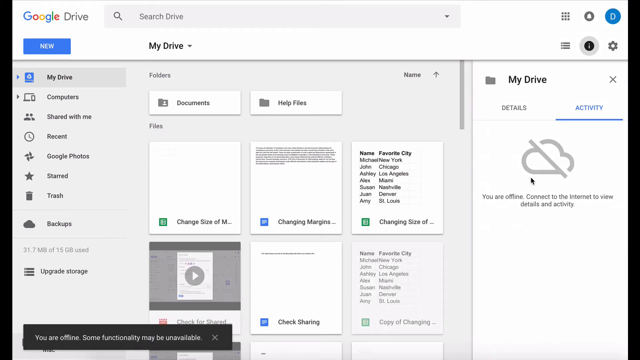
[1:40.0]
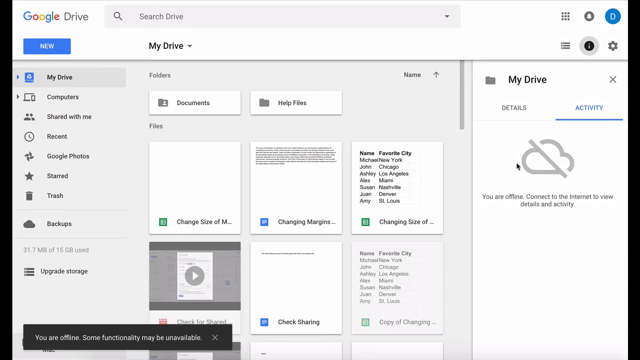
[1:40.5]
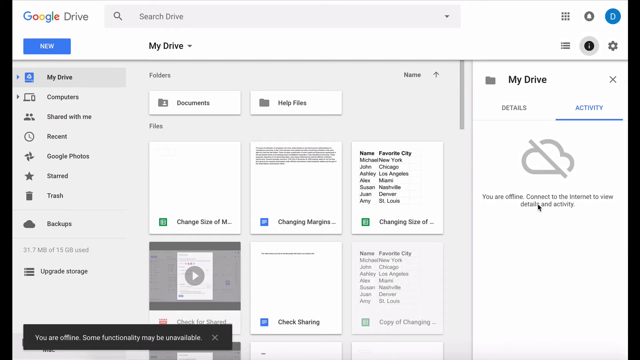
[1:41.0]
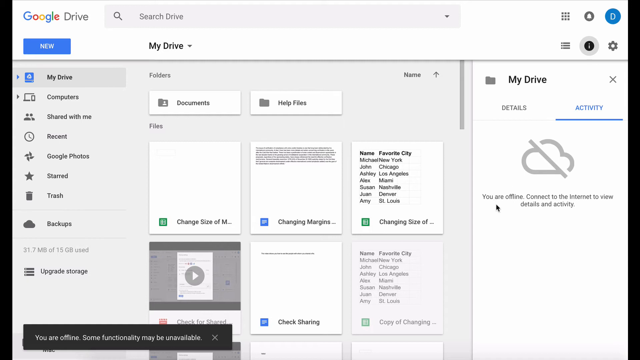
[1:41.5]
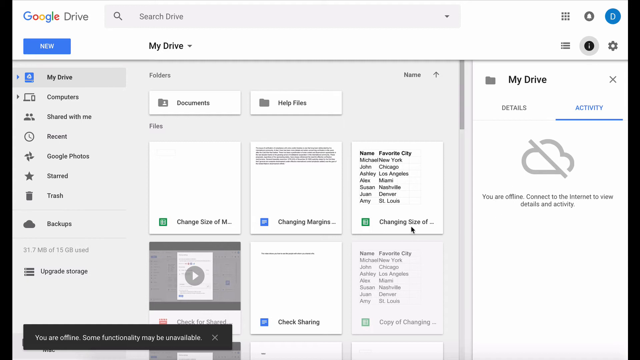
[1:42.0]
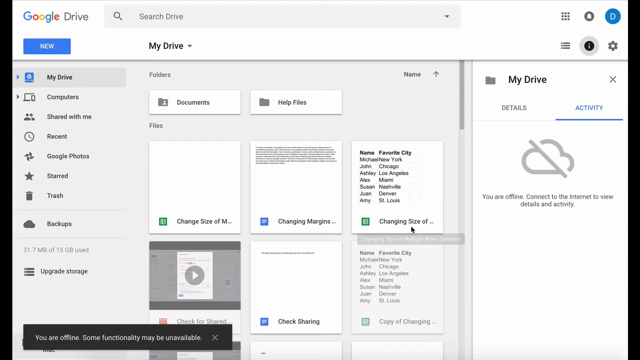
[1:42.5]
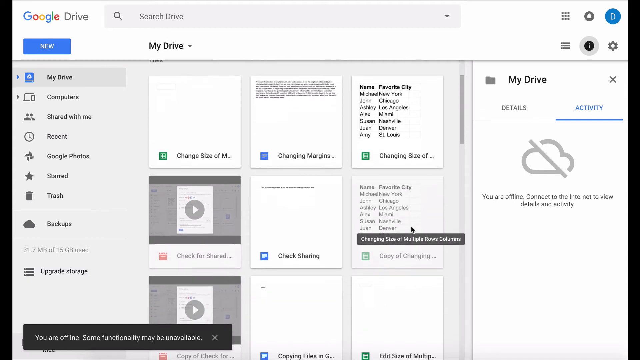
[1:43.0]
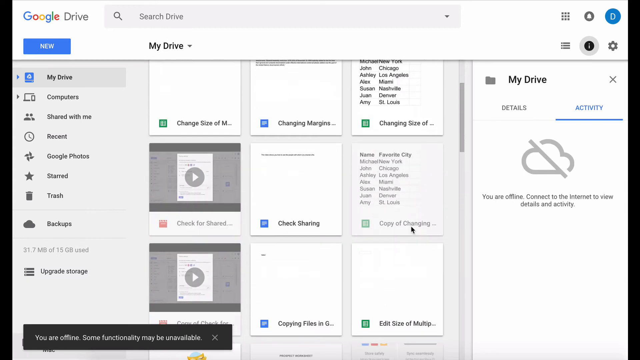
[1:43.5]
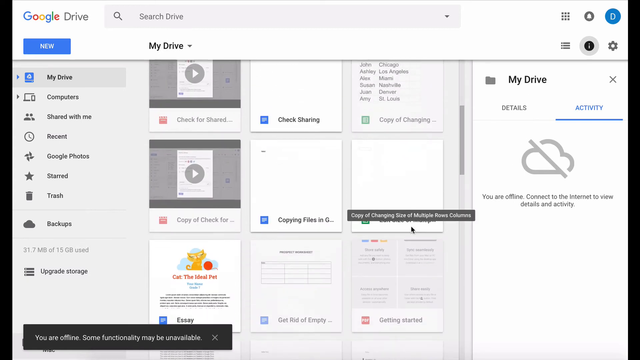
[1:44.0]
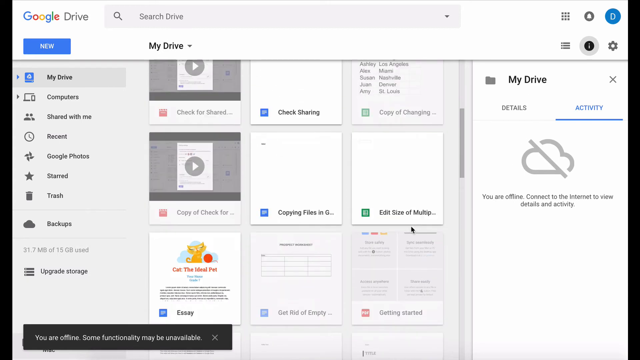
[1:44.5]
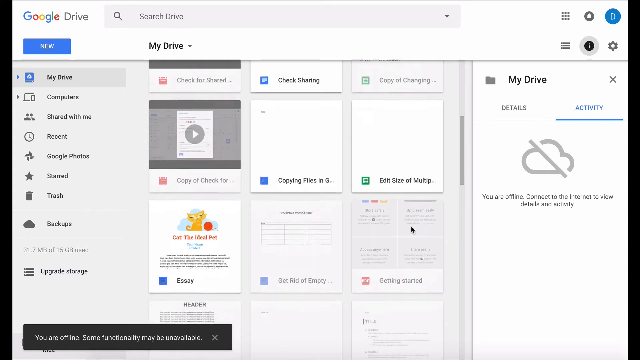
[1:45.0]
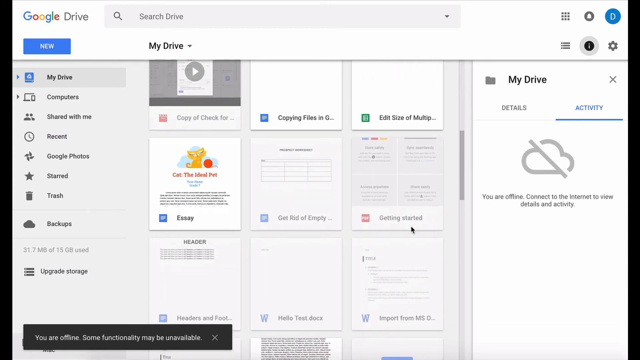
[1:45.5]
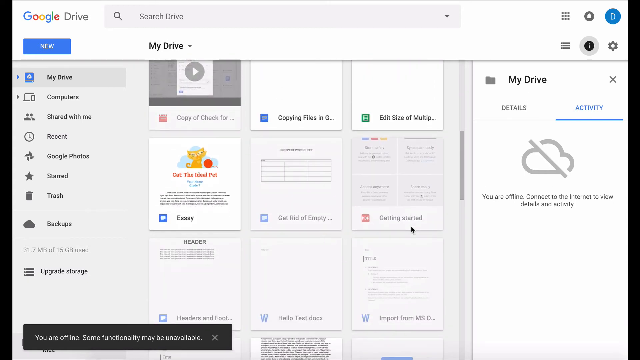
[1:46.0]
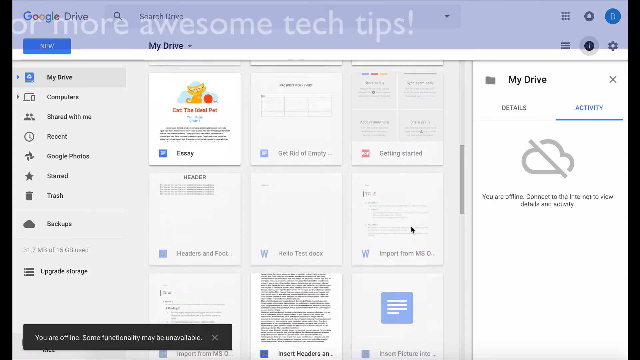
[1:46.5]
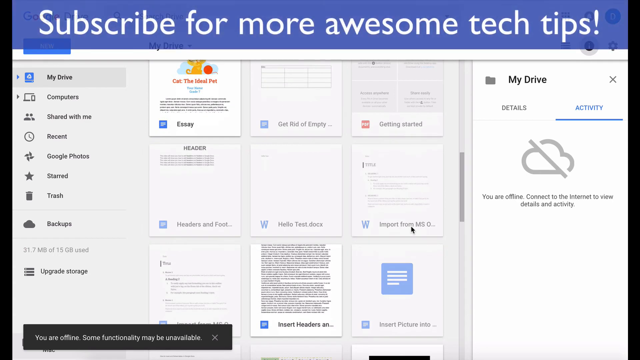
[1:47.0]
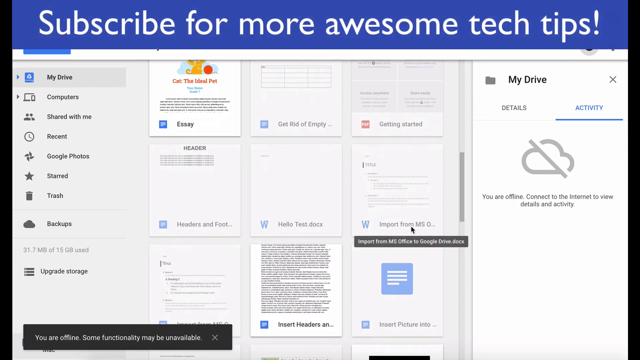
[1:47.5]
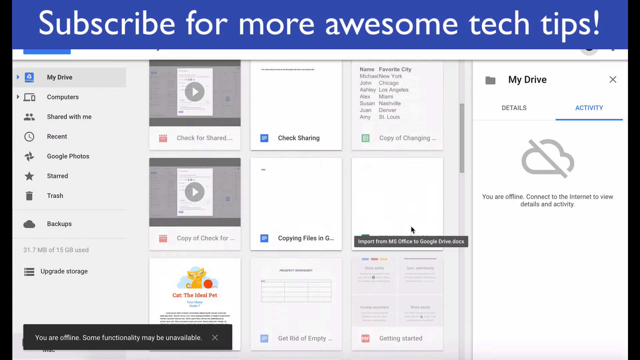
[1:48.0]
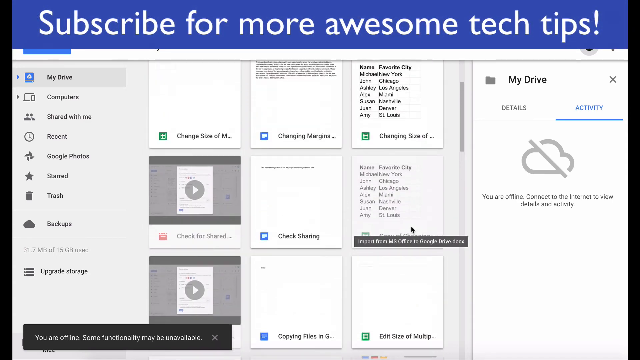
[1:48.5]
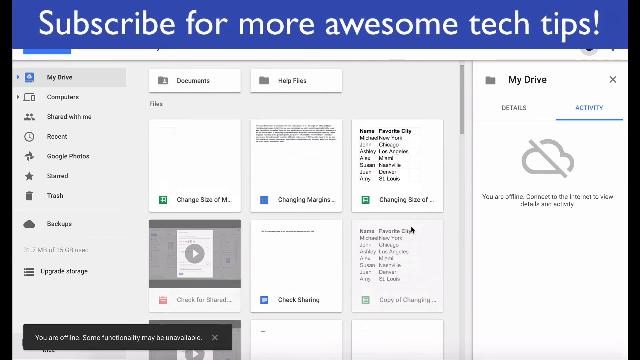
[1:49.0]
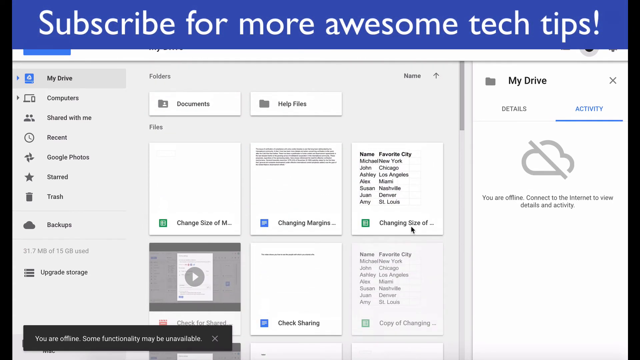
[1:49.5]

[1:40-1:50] Somebody appears to be using the Google Drive website. "Google Drive" is at the top left of the screen, with a search bar reading "Search drive" next to it. At the top right is a blue circle with a white V in it, probably the icon representing the user. Below Google Drive at the top left is "New", and below that "My Drive", "Computer", "Shared with me", "Recent", "Google Photos", "Starred", "Trash" and "Backups", then 31.7 megabytes of 15 gigabytes used and "Upgrade storage". In the middle at the top, below the search bar, is "My Drive", and below that "Folders", "Documents", "Help files", an item beginning "Change size of M", and "Changing margins". Next to that are the headings "Name" and "Favorite city". Under Name are Michael, John, Ashley, Alex (possibly Alice), Susan, Juan and Amy; the cities listed are Chicago, Los Angeles, Miami, Nashville, Denver and St. Louis.